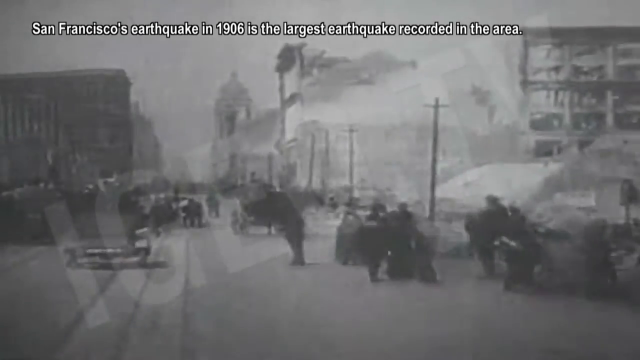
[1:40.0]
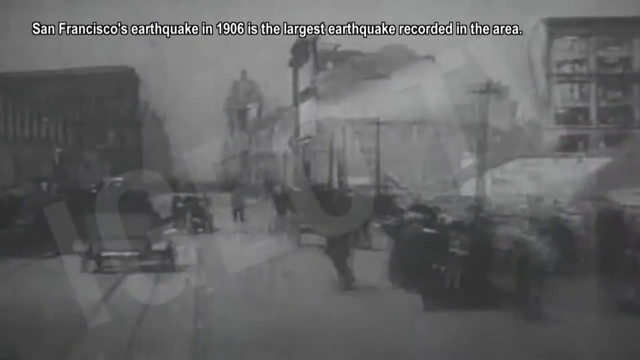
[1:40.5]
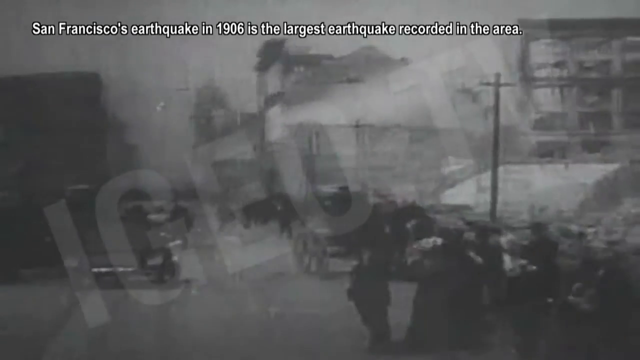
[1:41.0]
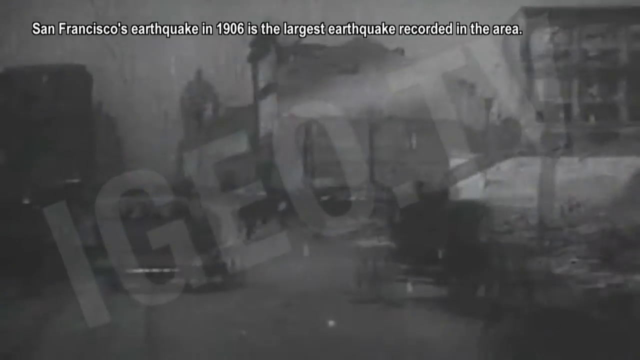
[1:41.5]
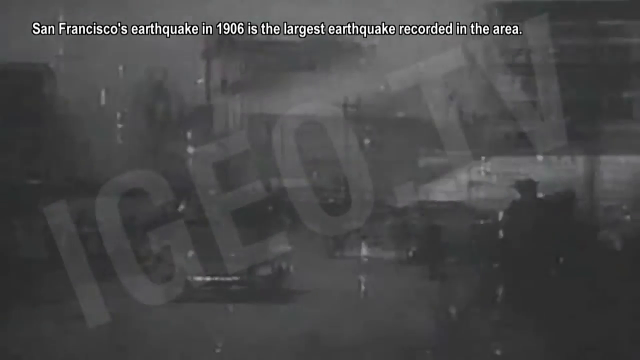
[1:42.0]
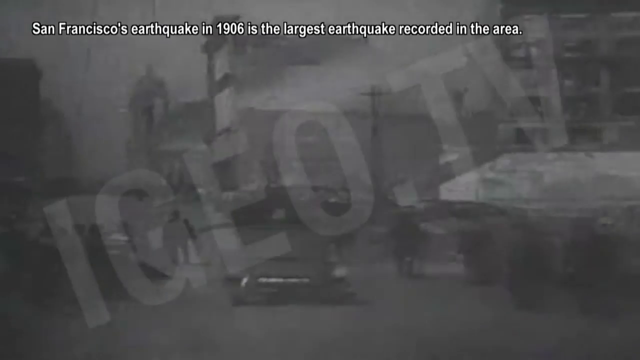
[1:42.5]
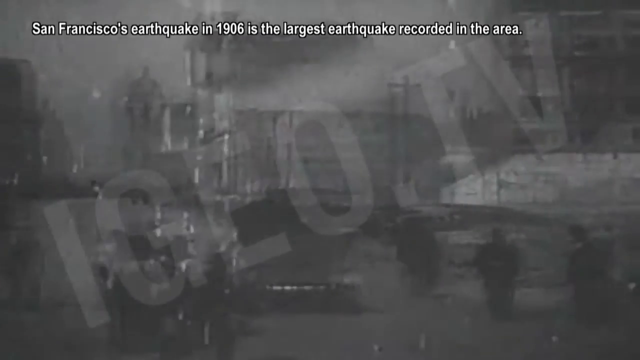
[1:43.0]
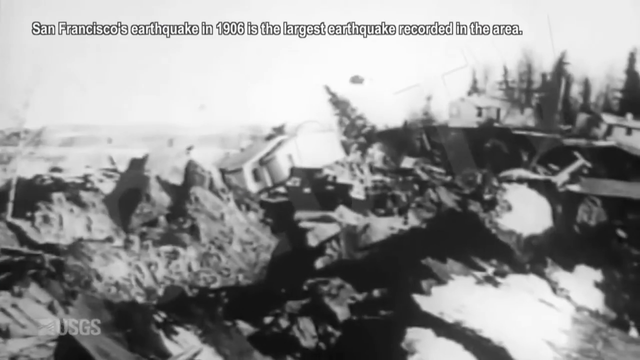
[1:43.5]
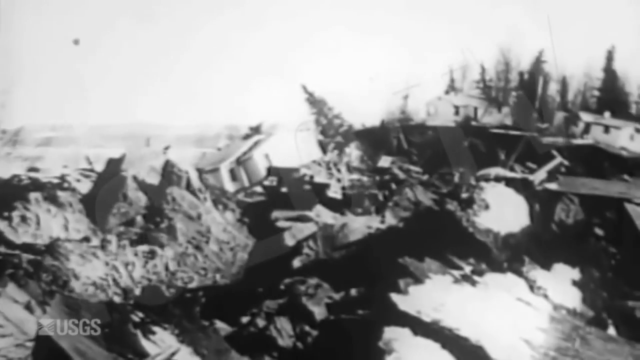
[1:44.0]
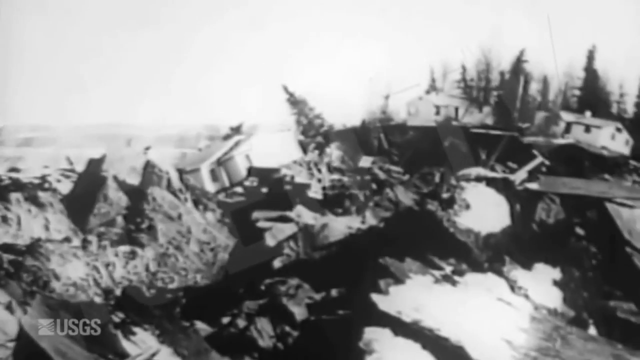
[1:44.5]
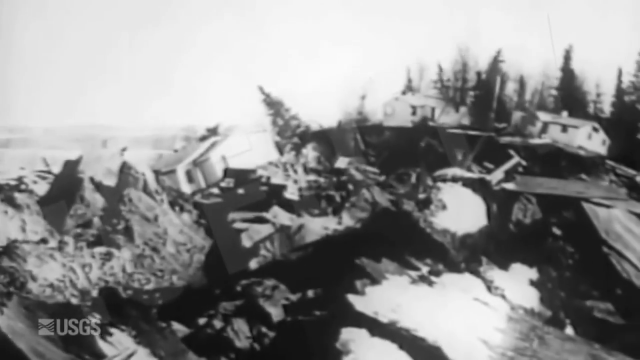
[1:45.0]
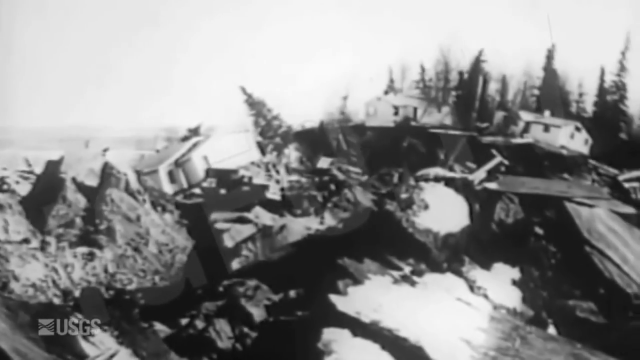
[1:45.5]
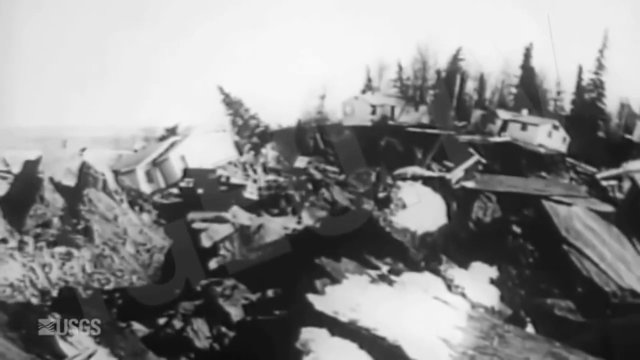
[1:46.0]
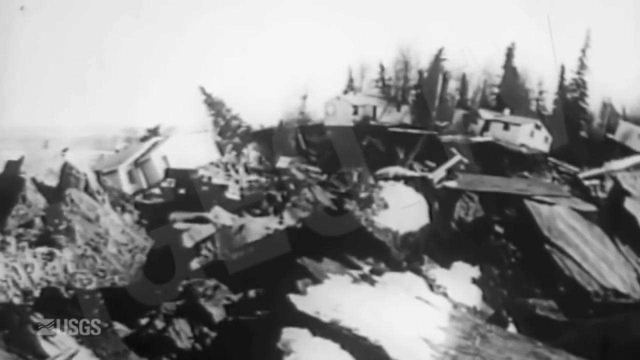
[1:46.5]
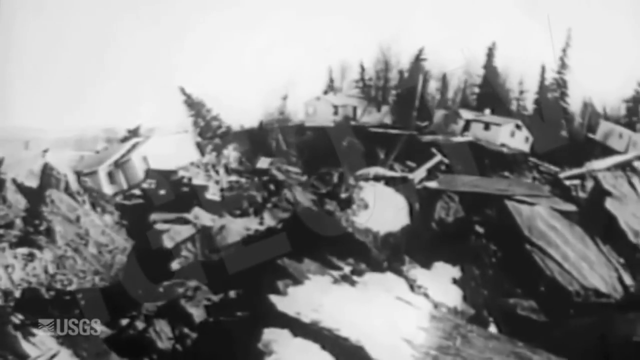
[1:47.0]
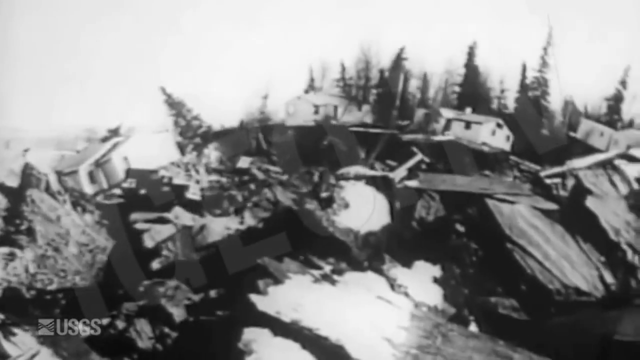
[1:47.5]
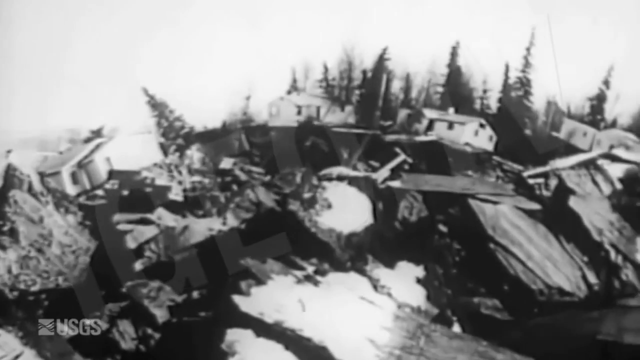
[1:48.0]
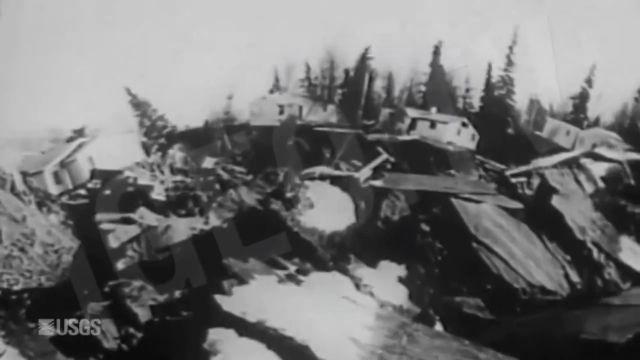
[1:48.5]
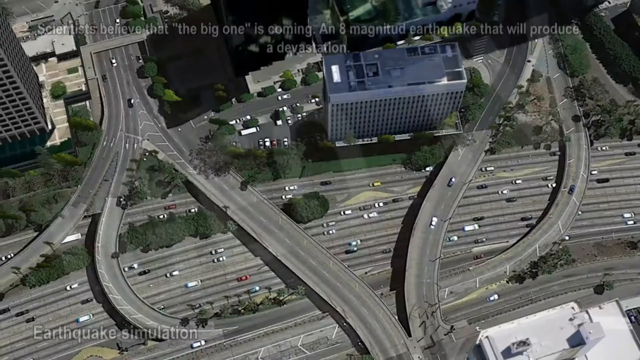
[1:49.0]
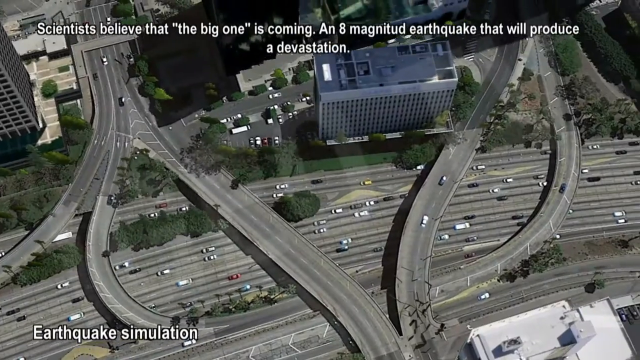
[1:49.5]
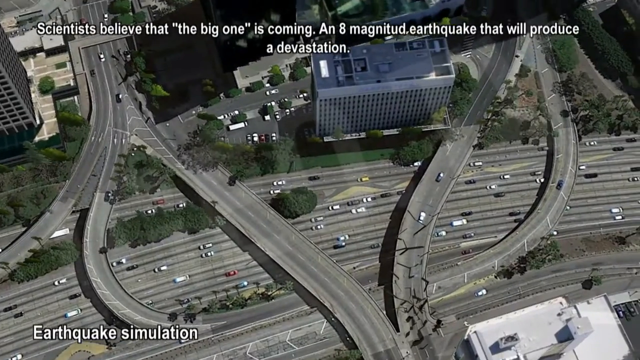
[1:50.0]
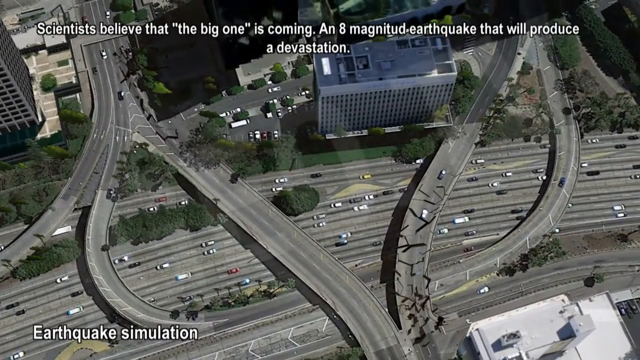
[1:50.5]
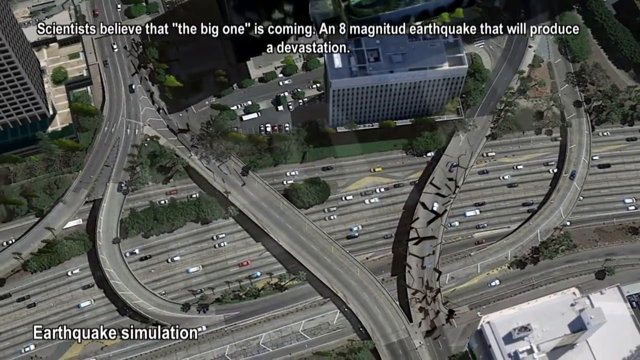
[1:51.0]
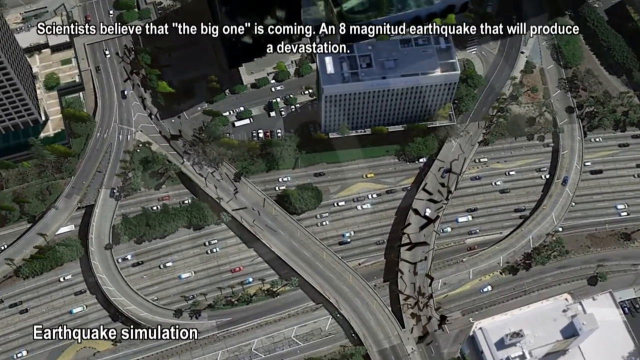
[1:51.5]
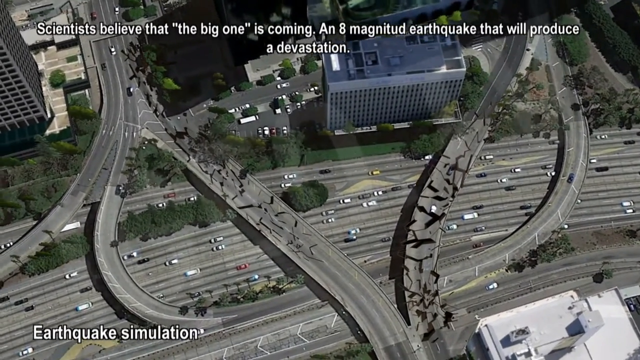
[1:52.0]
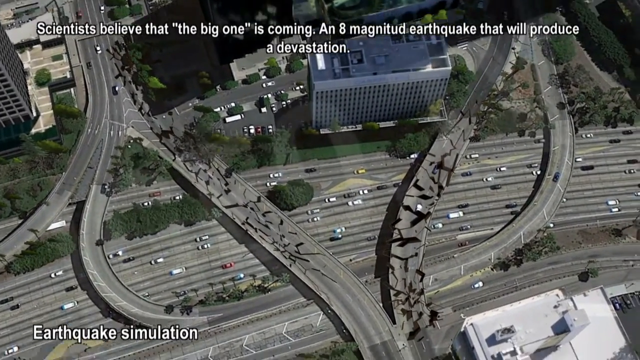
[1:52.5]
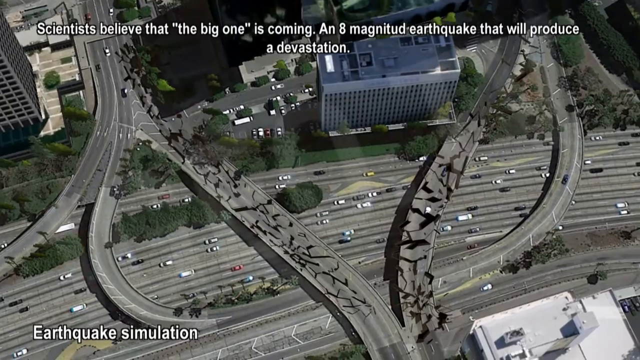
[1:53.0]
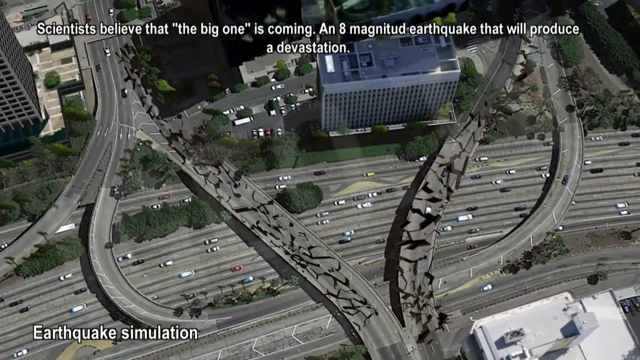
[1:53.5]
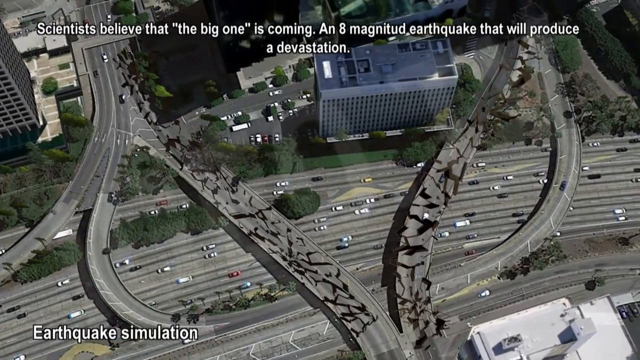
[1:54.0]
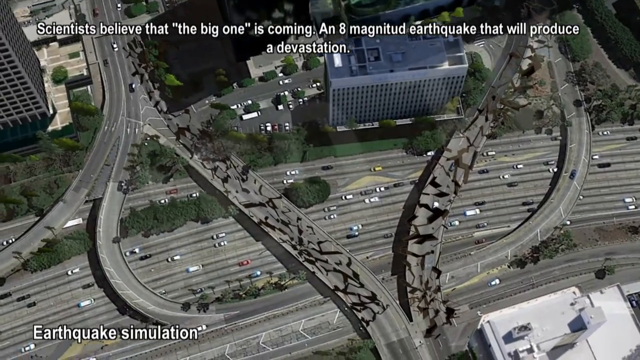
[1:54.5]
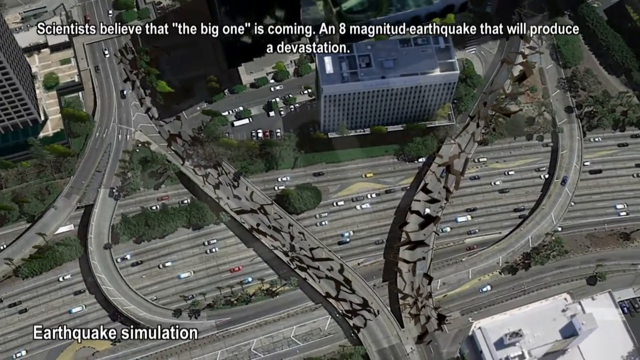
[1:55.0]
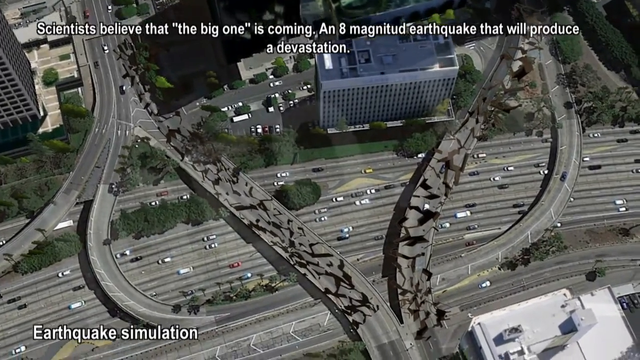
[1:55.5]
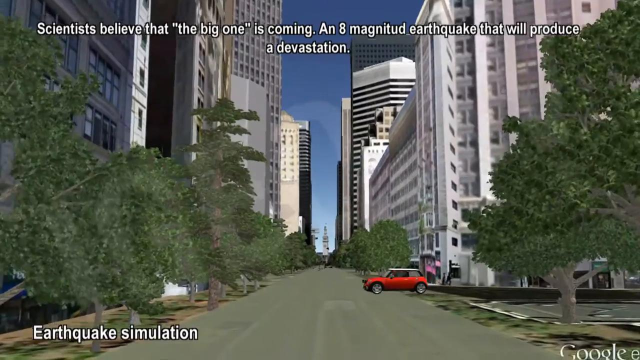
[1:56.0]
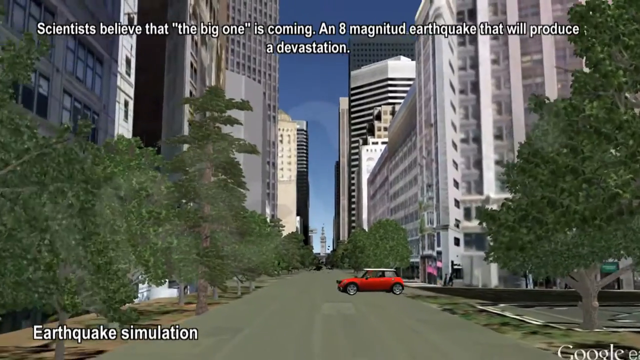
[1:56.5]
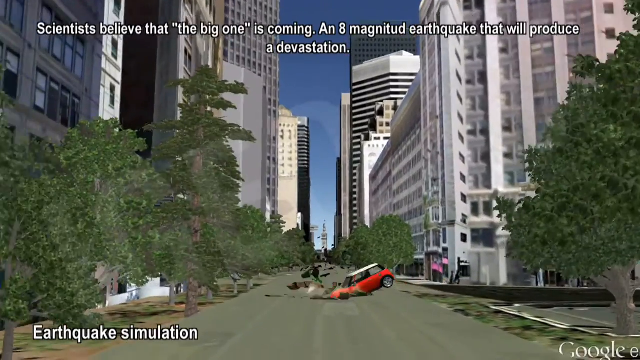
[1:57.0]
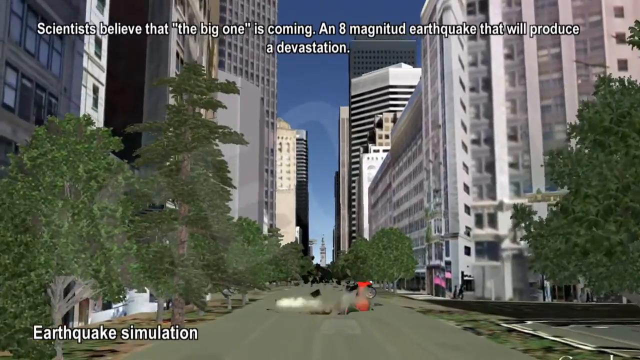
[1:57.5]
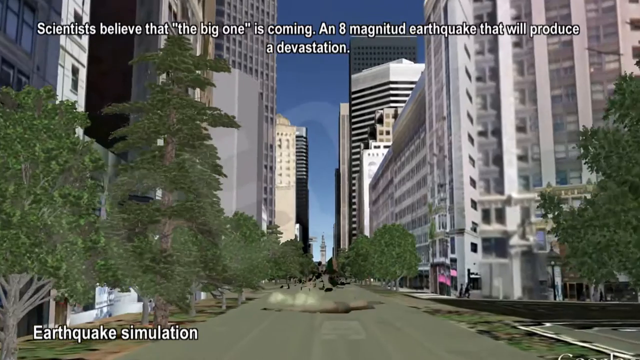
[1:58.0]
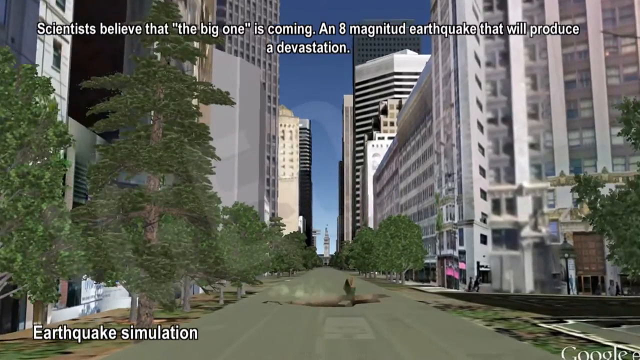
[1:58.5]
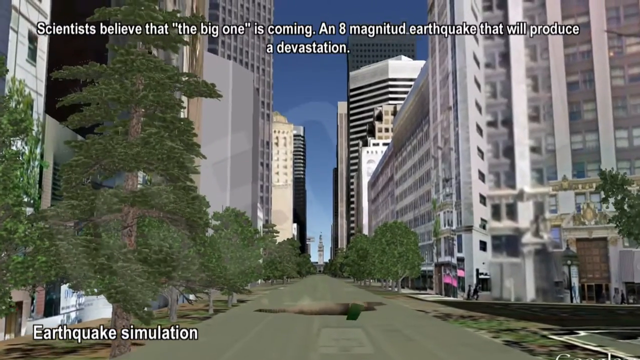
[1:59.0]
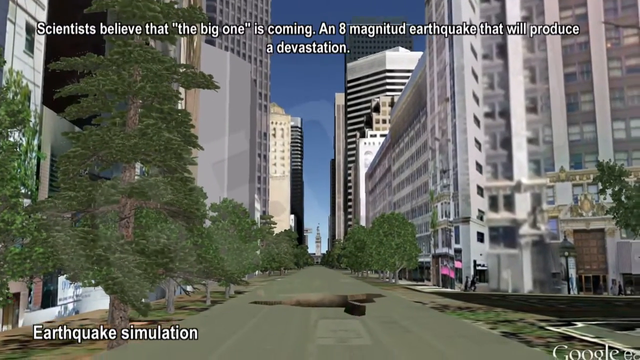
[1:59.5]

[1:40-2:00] Text states that San Francisco's earthquake in 1906 is the largest earthquake recorded in the area. A scene shows what looks like child's toys tossed around. A computer-generated earthquake follows, with text saying scientists believe that the big one is coming, an eight magnitude earthquake that will produce a devastation. Simulated damage to freeways is shown from the air, with the view rocking. Simulated holes then open up in downtown LA.